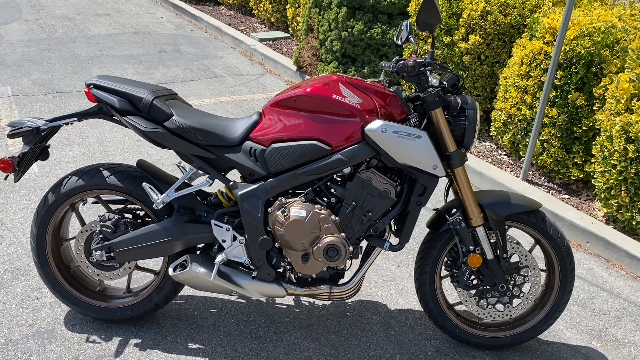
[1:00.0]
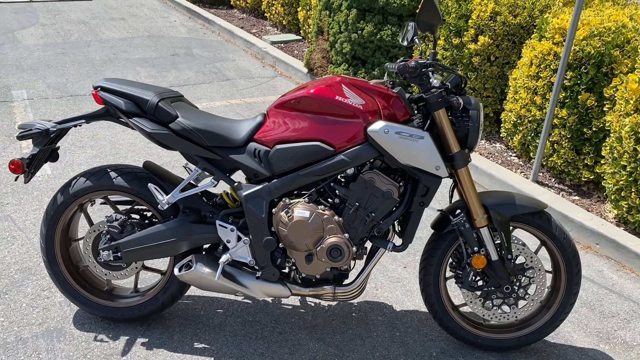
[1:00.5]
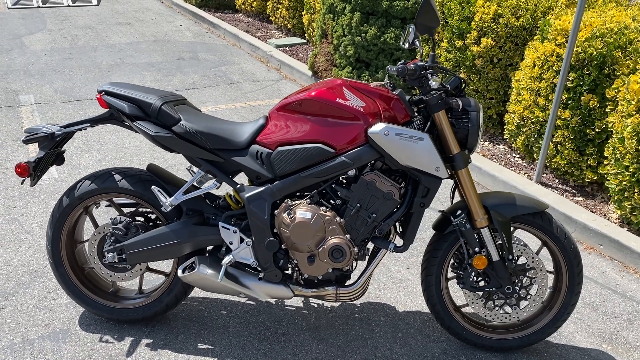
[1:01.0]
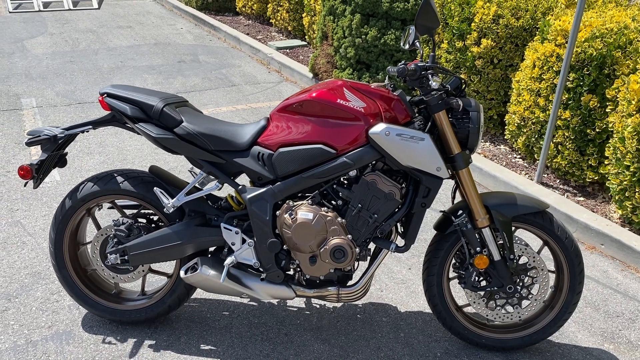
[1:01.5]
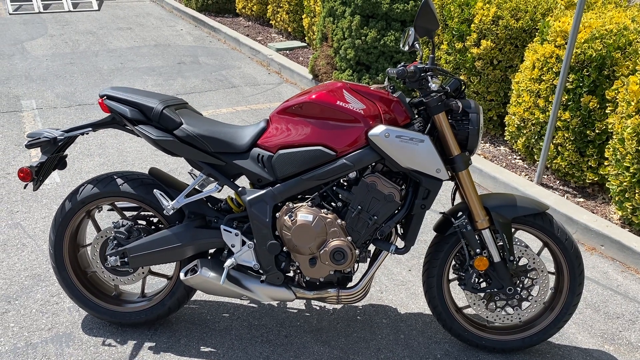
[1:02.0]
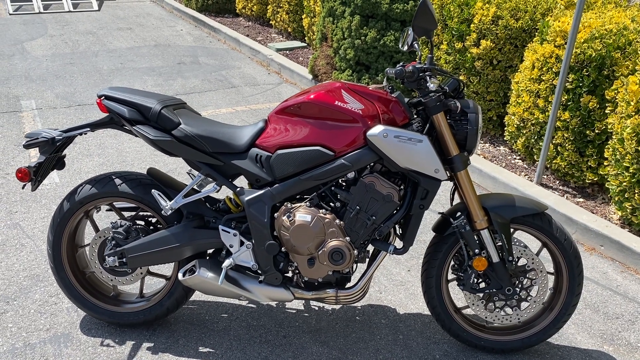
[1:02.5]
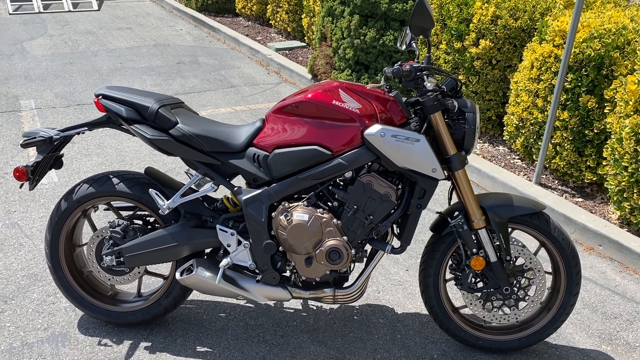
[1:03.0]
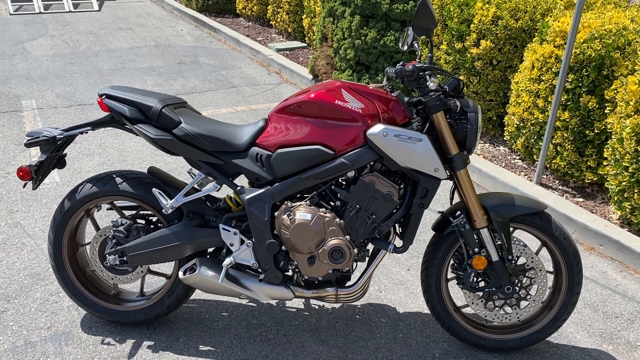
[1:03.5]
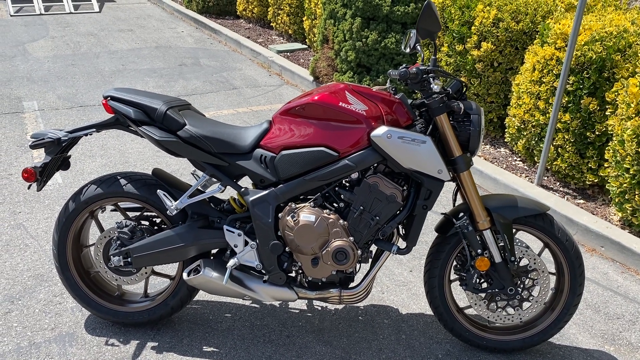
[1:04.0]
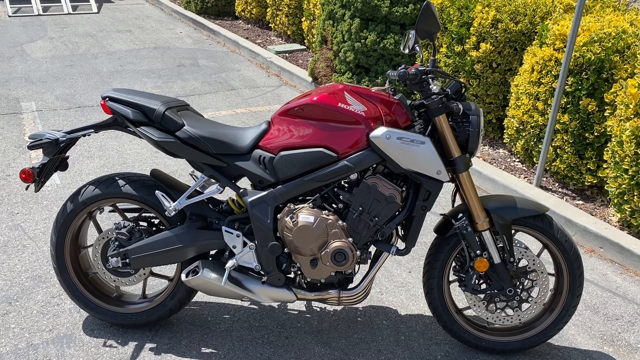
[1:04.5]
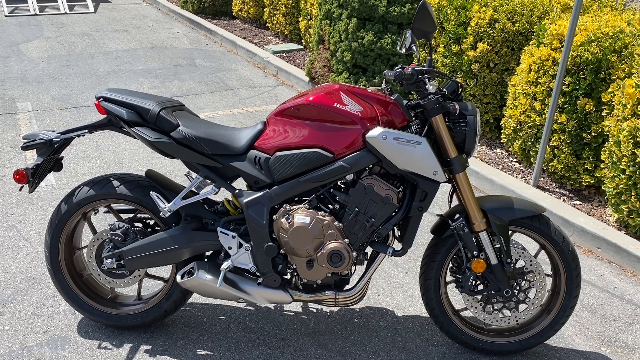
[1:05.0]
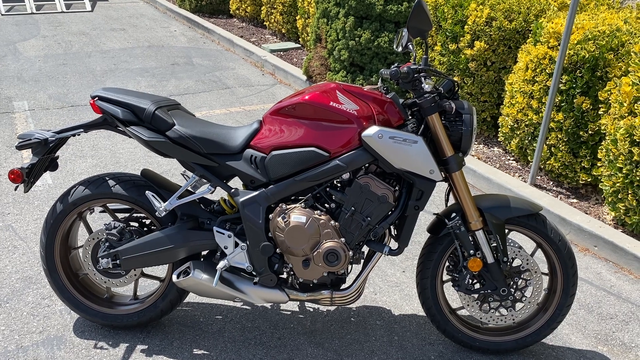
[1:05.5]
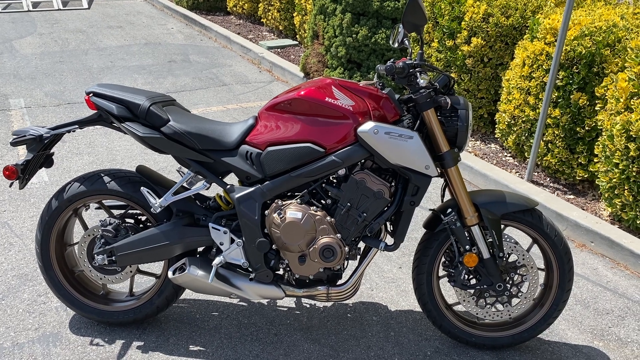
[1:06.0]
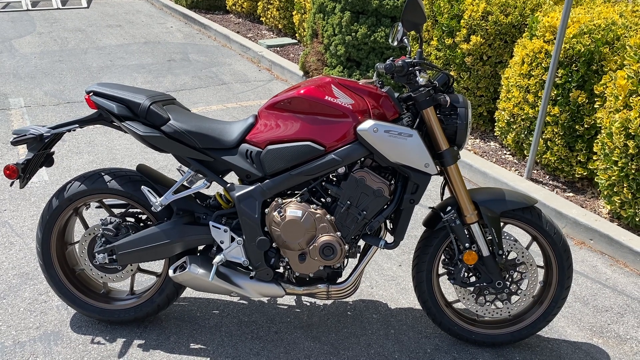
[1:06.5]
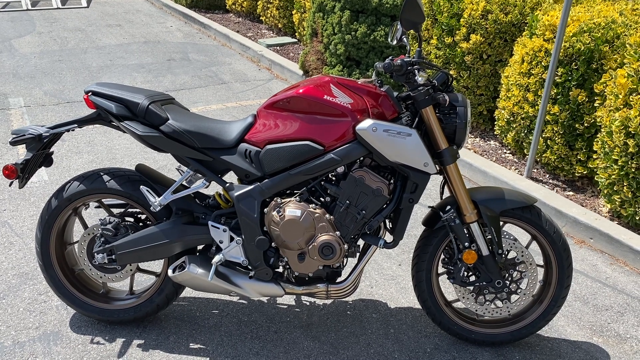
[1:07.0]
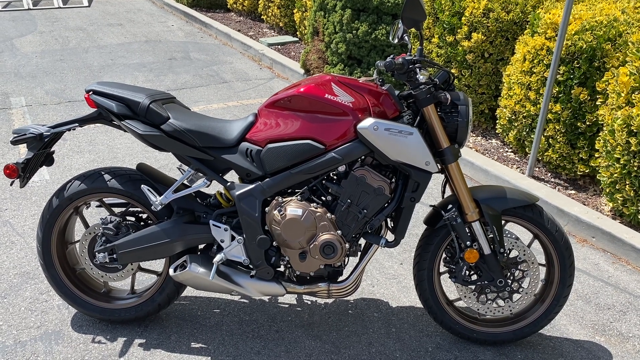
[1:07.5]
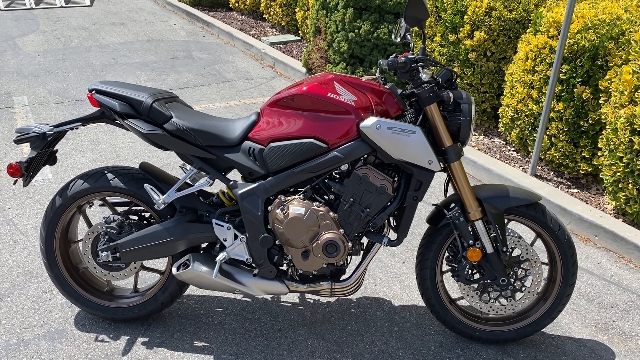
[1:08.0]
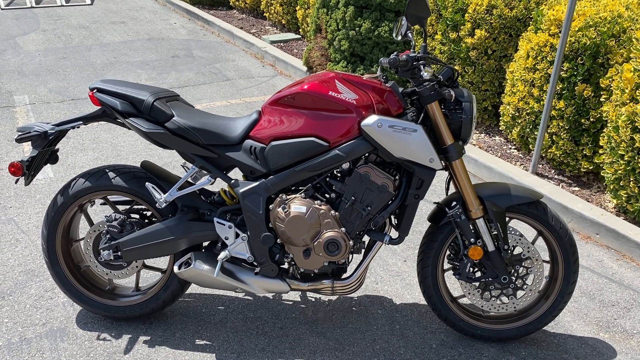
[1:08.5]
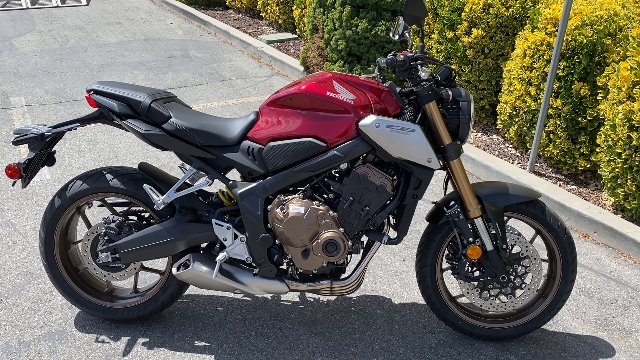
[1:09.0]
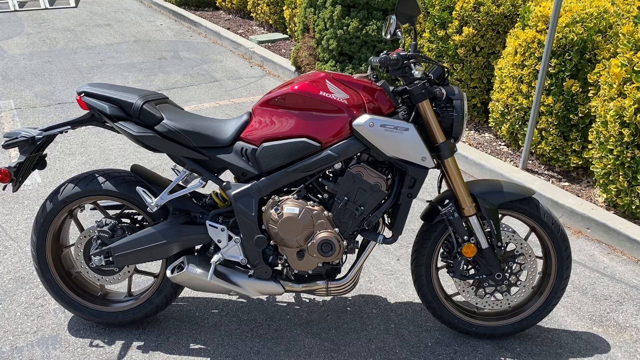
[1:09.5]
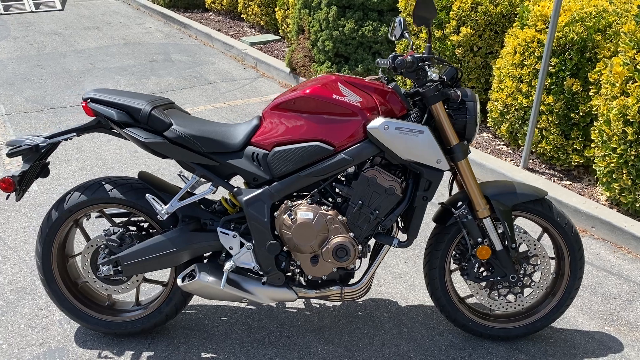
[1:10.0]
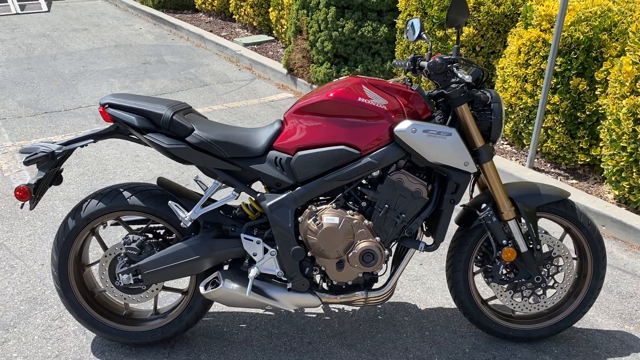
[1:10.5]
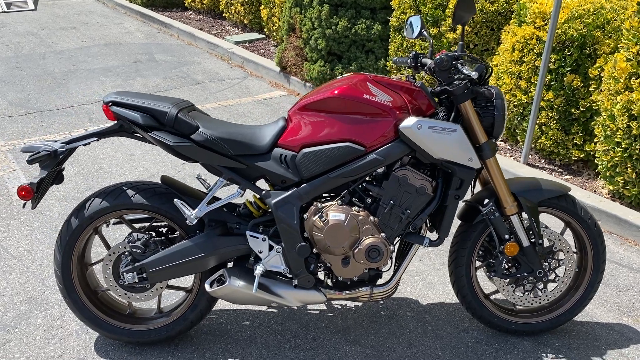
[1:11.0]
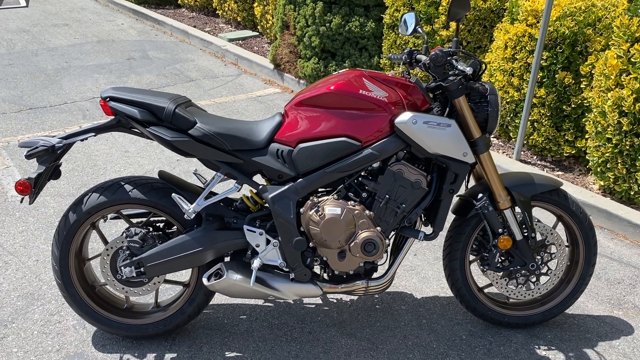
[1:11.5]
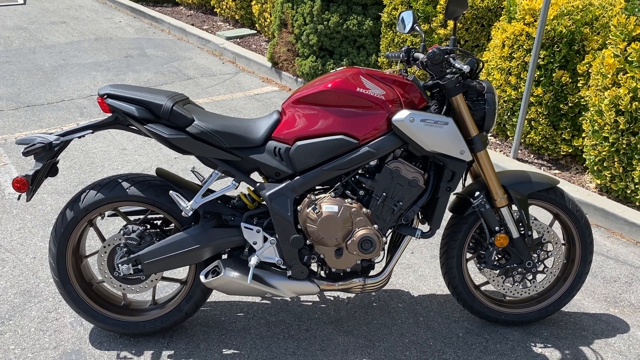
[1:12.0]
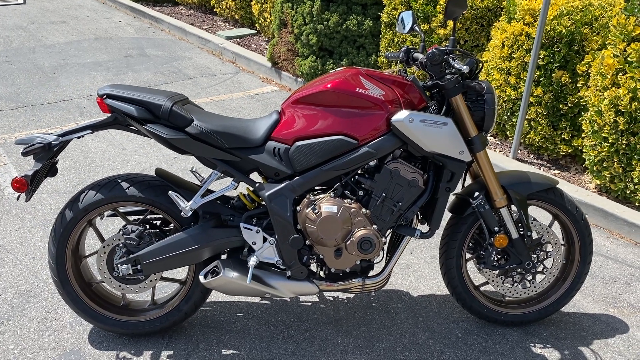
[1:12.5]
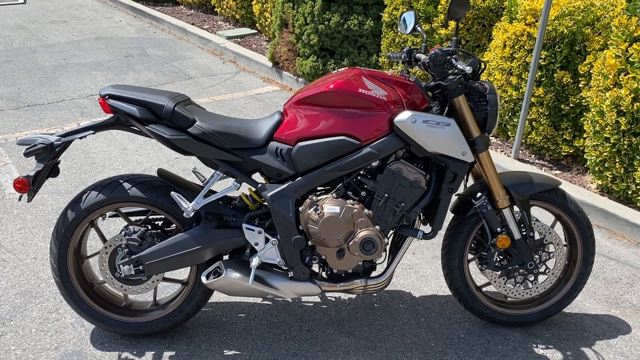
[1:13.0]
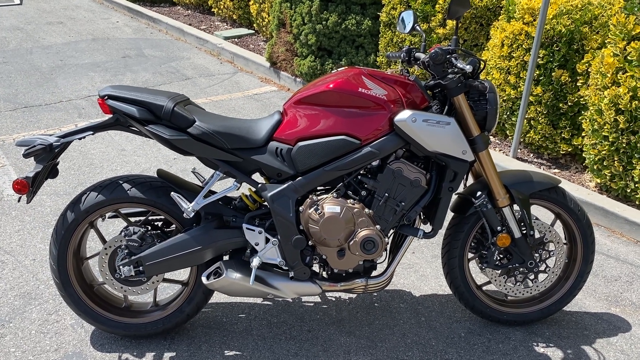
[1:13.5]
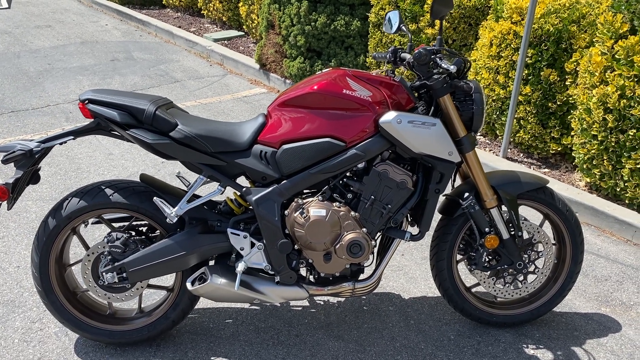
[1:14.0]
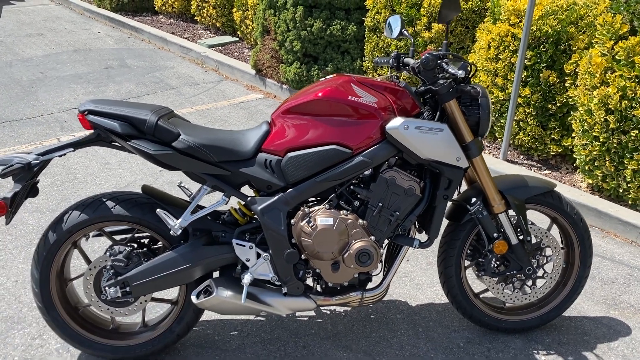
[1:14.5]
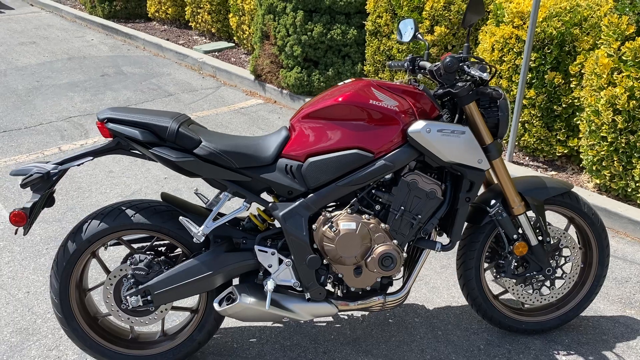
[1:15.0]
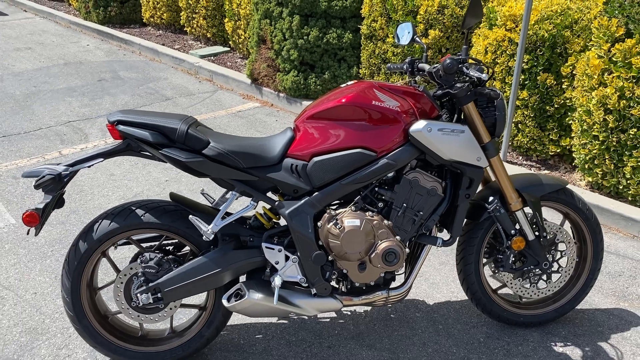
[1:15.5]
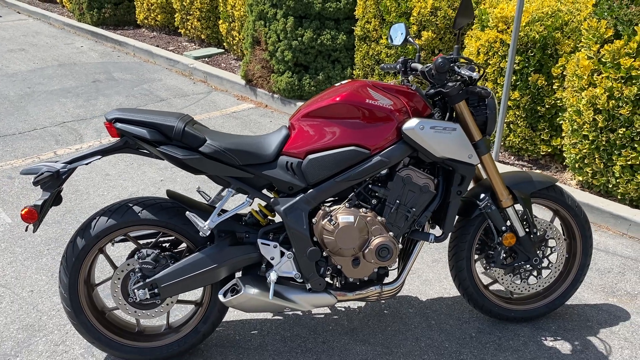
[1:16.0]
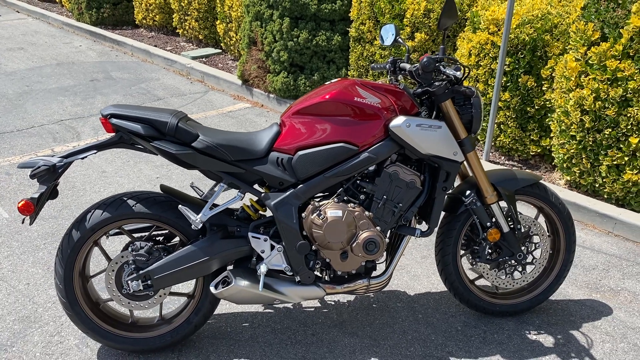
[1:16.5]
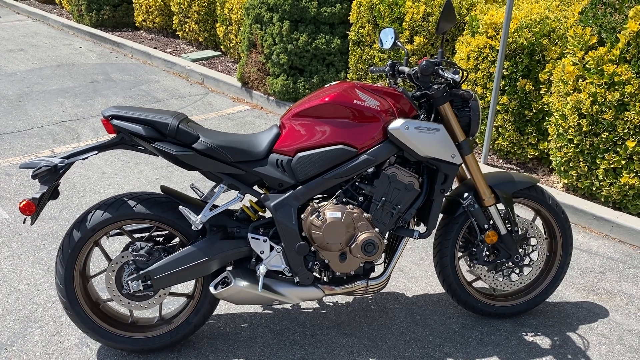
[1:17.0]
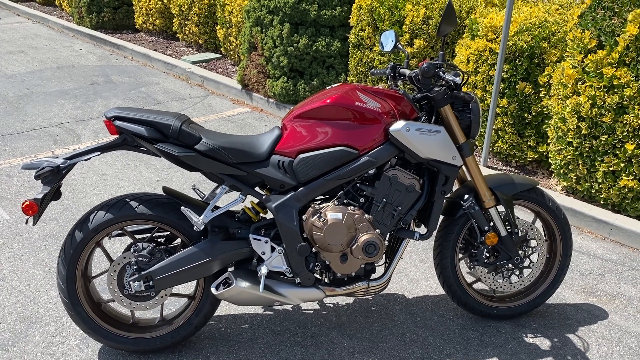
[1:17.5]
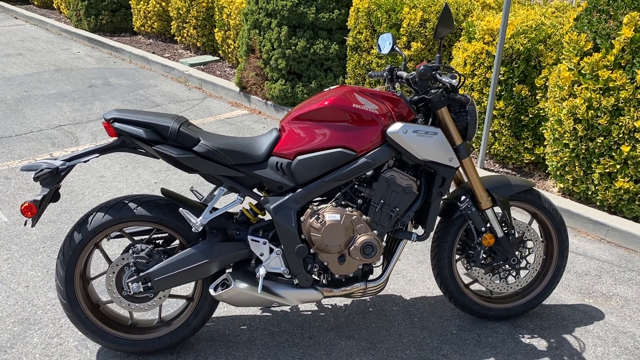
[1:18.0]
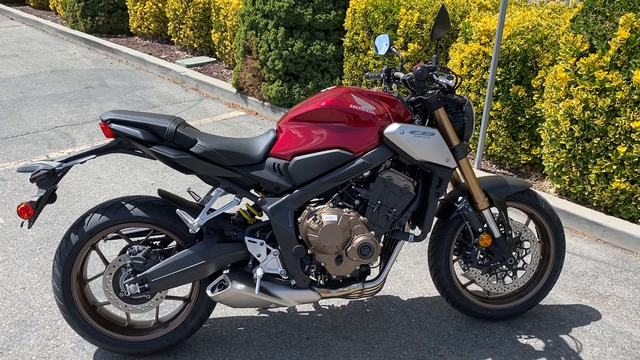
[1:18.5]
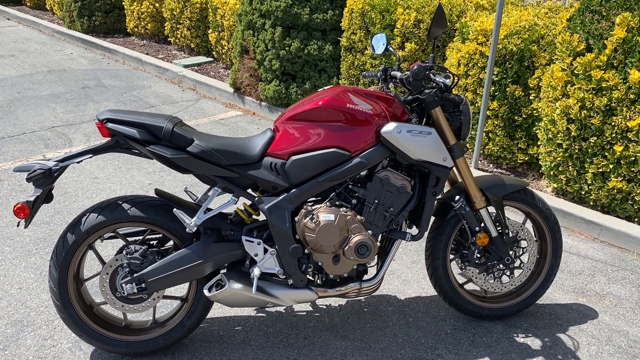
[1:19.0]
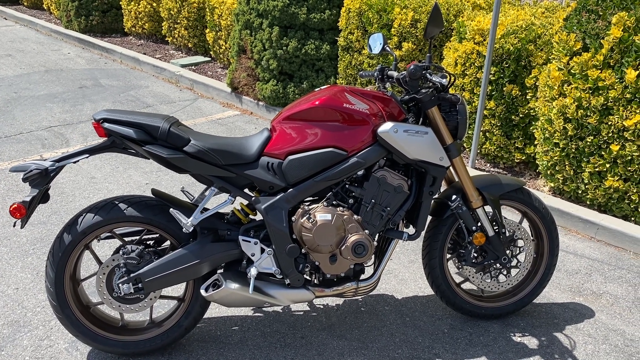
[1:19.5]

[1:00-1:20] Someone walks around the Honda motorcycle filming it. He is just showing the motorcycle, not pointing anything out in particular, and the view moves back and forth as if he is shifting his weight; he does not walk around much. In the background there is a curb, green bushes and a cover, probably for sprinklers. The parking lot is cement rather than asphalt, with white lines. The motorcycle is red, black, silver and gold. There is a reflector on the front wheel, red taillights and brake lights are visible, and the mirrors come up.